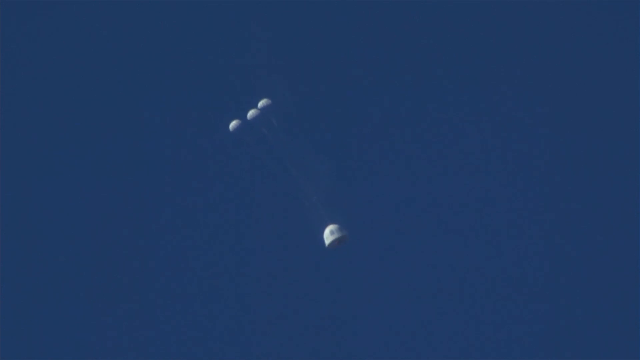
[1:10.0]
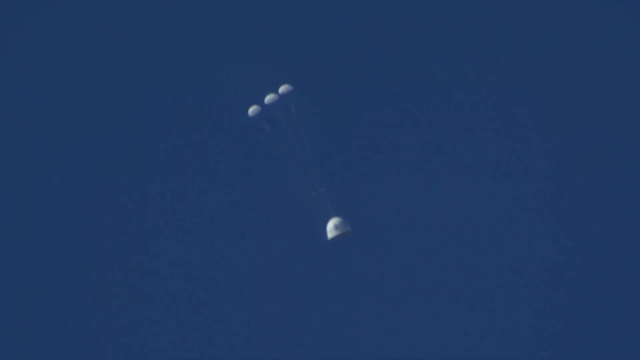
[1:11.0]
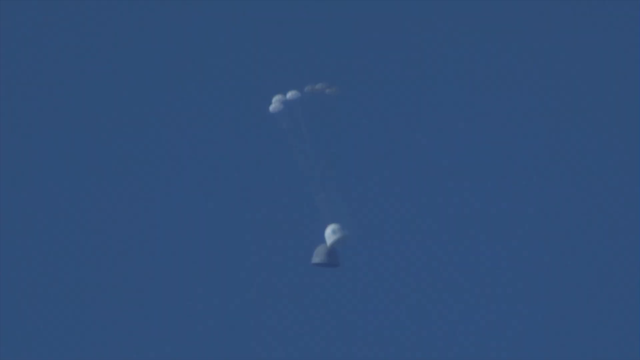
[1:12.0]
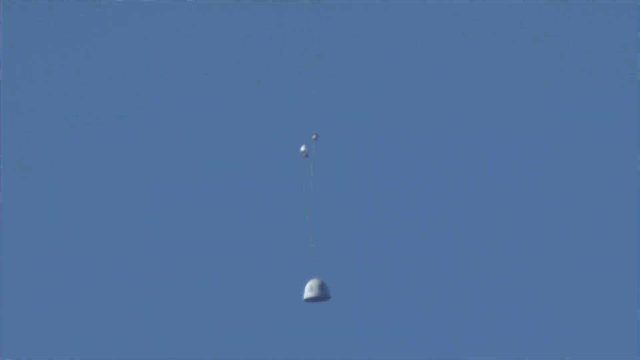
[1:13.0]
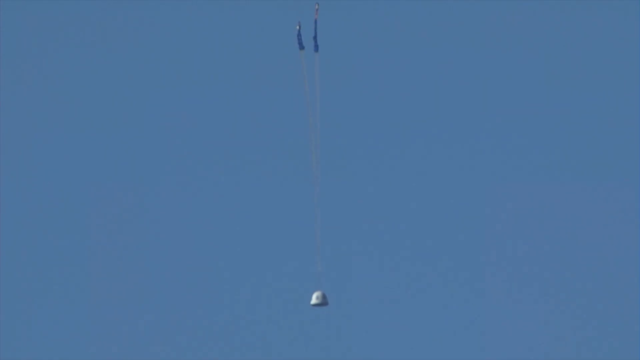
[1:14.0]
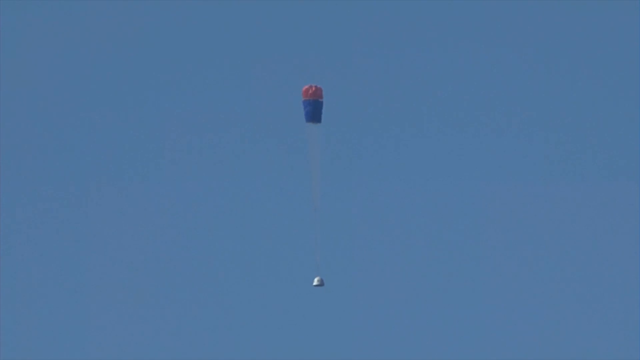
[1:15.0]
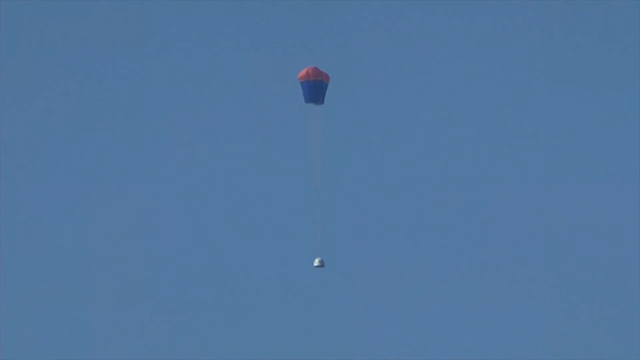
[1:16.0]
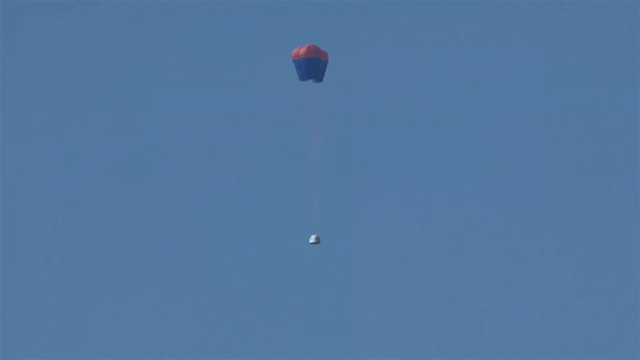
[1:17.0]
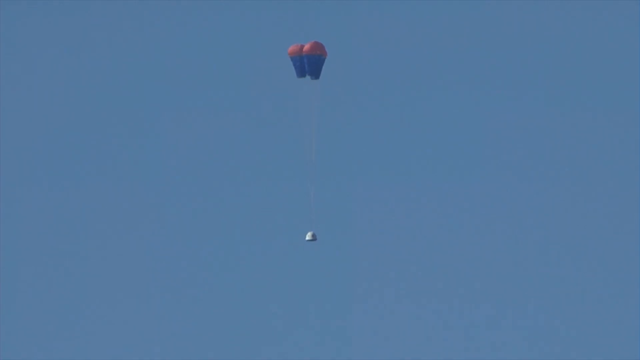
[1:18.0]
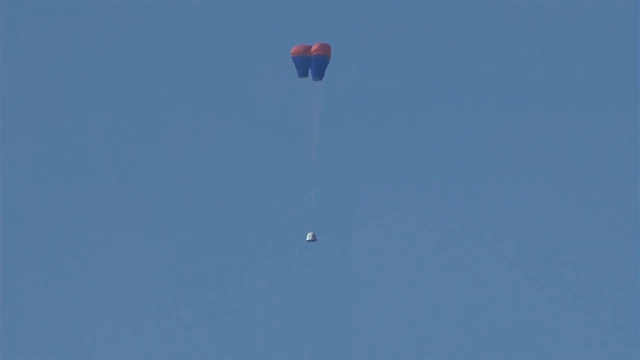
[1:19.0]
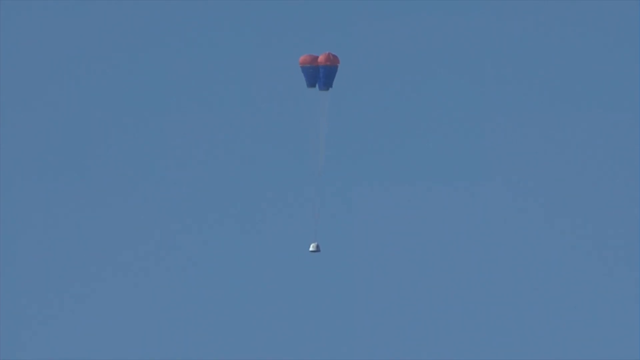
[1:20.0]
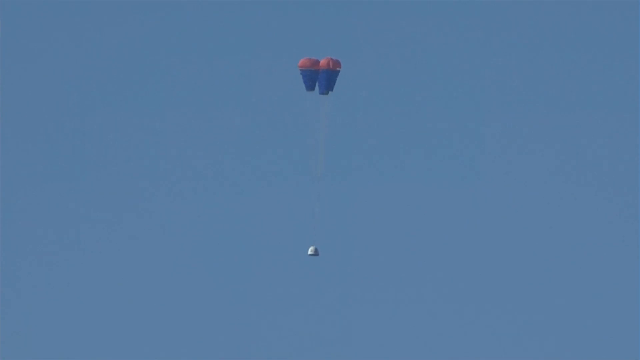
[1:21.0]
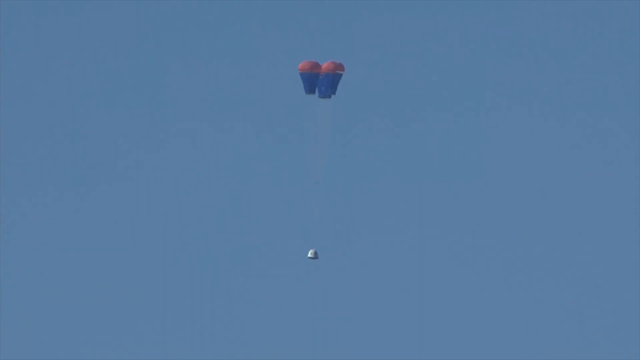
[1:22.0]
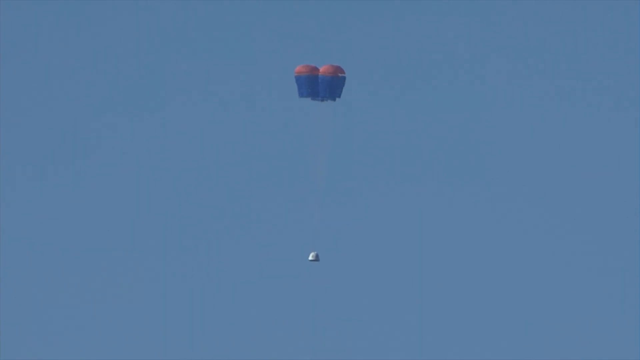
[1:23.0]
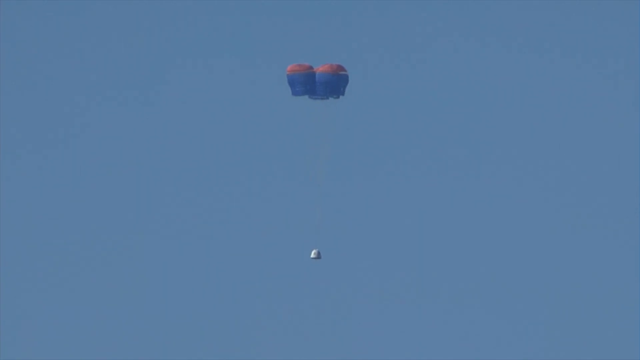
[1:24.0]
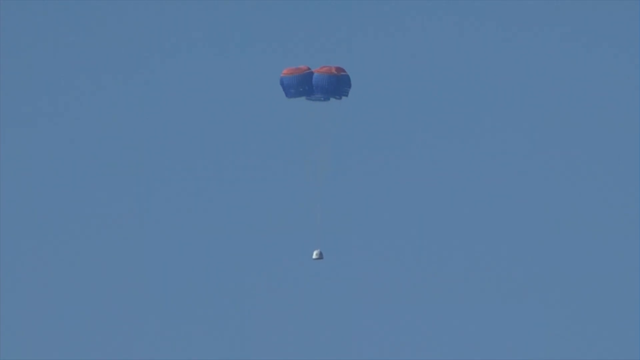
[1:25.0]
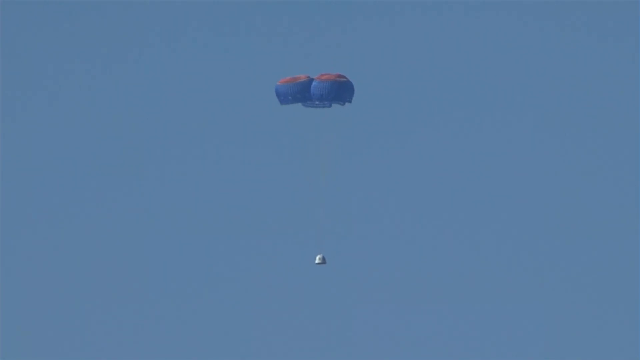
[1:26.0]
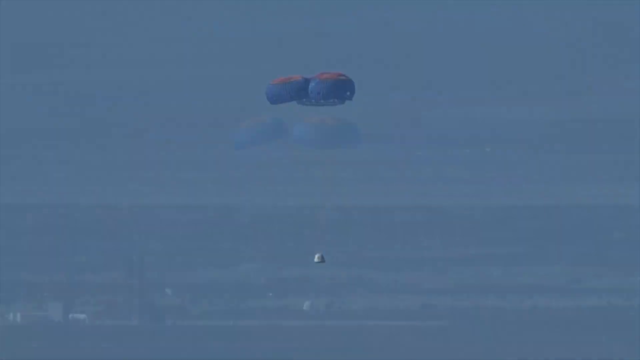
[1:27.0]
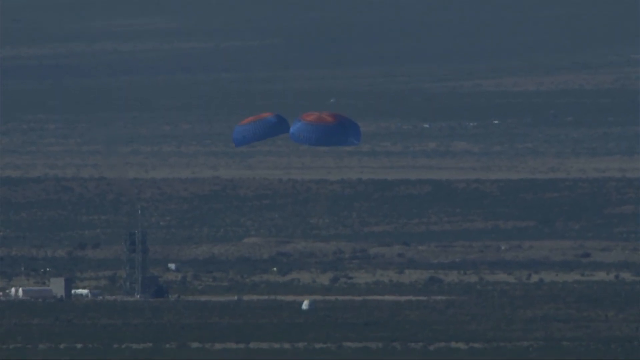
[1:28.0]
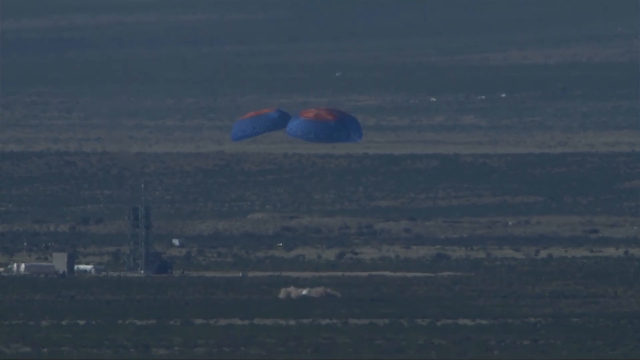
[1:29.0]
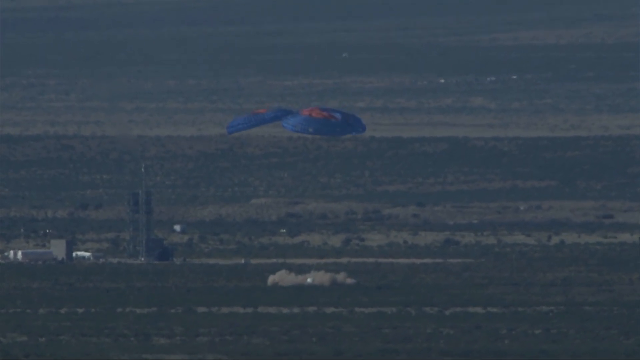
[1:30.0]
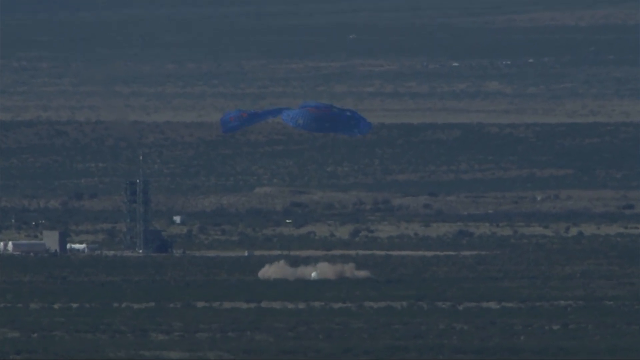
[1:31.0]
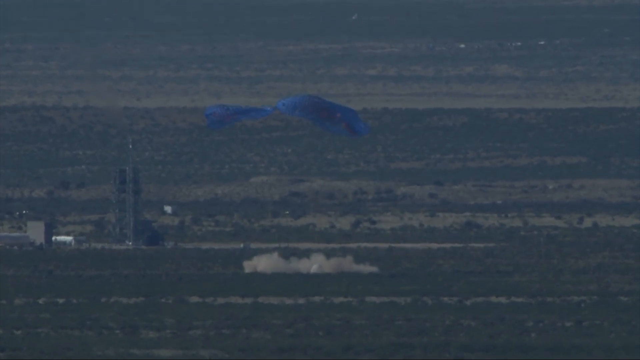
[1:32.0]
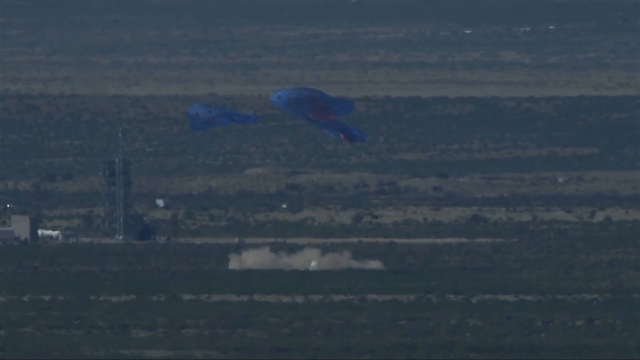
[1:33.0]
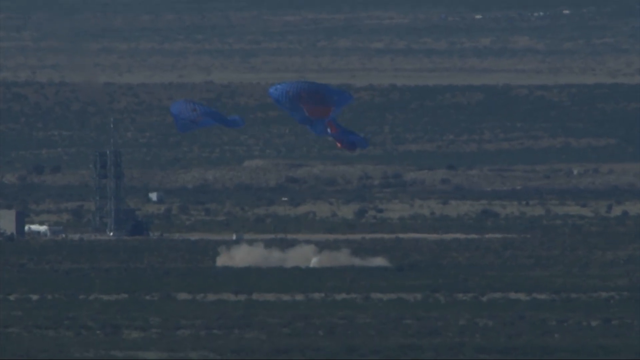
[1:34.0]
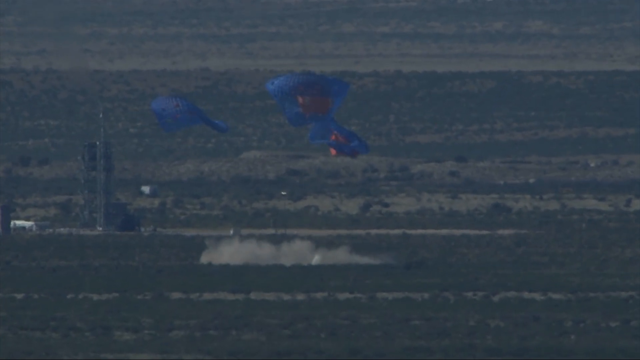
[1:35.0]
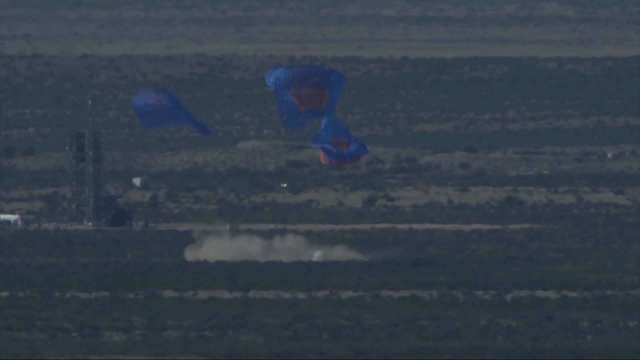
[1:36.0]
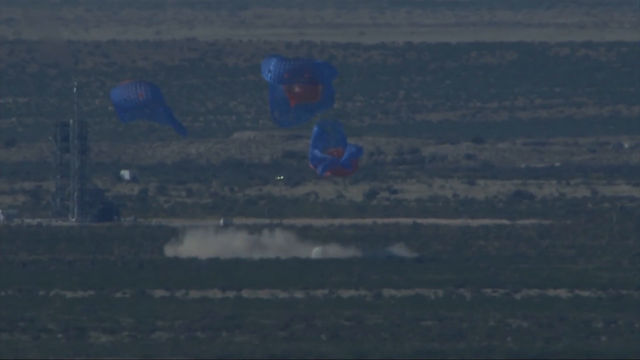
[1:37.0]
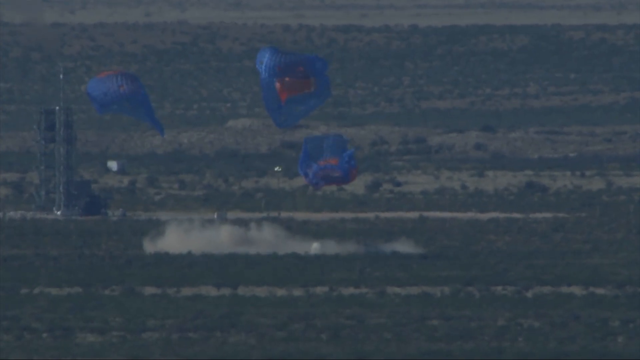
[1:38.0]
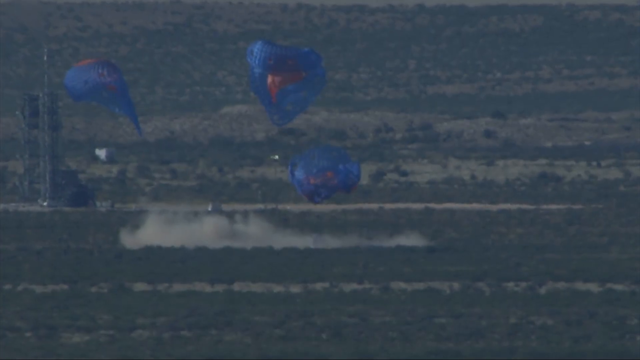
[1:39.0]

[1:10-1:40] The capsule from the Blue Origin spaceship continues its descent against a deep blue, cloudless sky. At first it falls relatively rapidly, and the camera pans downward at the same rate so that the capsule stays in the center of the screen. It is held aloft by three small white parachutes. These detach from the capsule, and in their place three larger, colorful parachutes open, with red tops and blue bottoms. They expand and become more elongated, and the capsule continues a much slower descent down to Earth. The capsule lands, raising a large dust cloud, and the three large parachutes, now almost completely flat, slowly drift to the ground behind it.